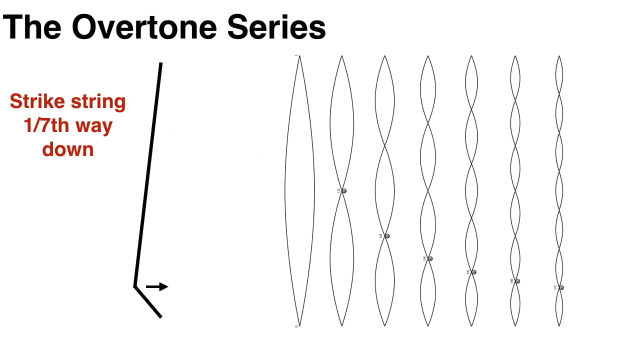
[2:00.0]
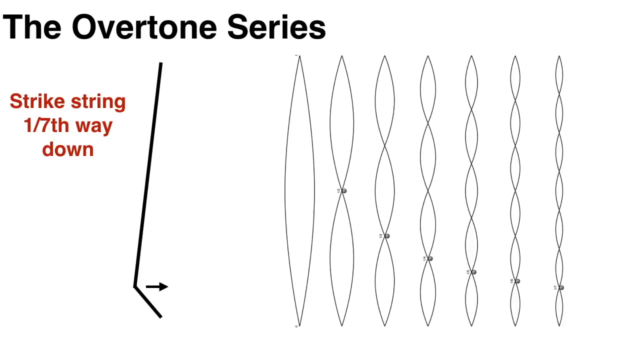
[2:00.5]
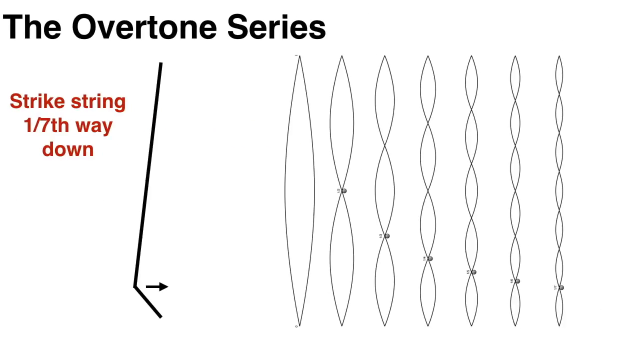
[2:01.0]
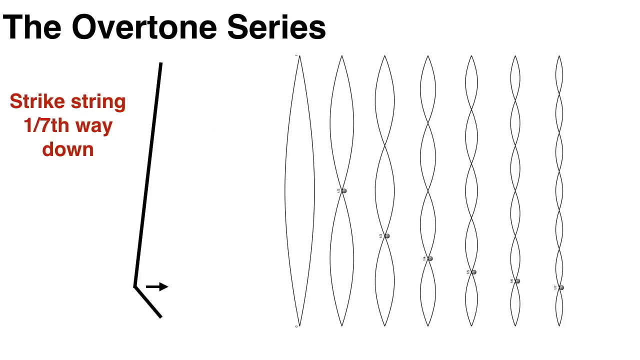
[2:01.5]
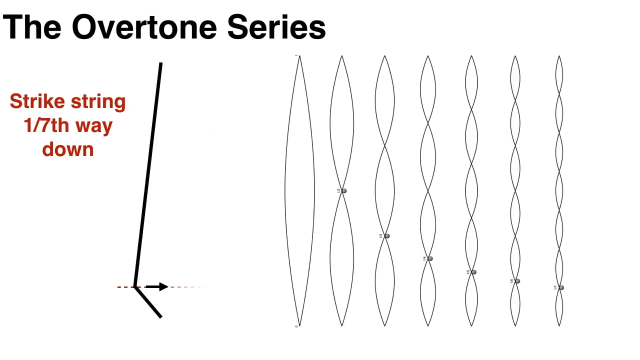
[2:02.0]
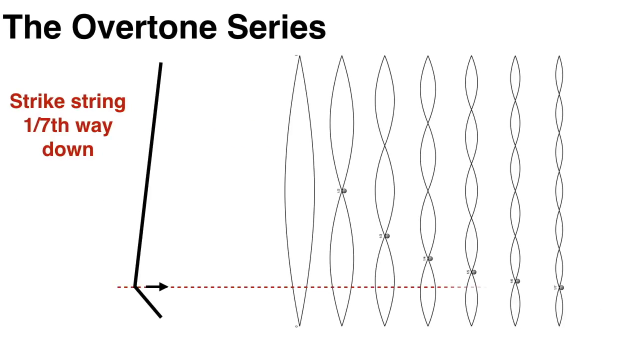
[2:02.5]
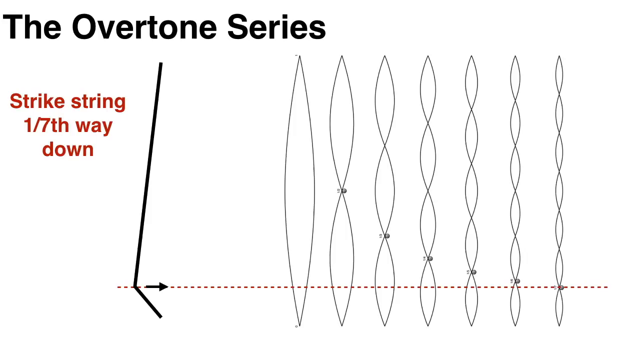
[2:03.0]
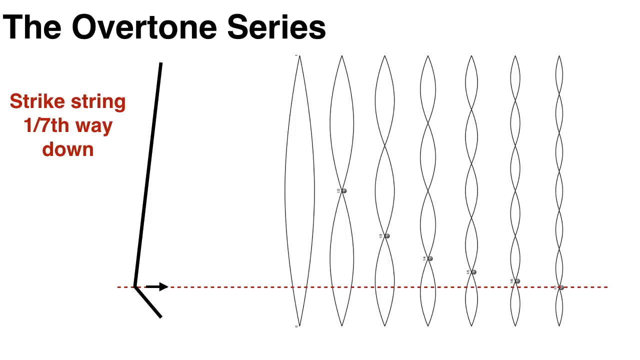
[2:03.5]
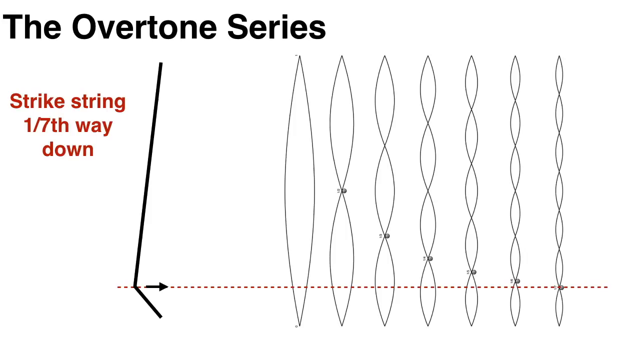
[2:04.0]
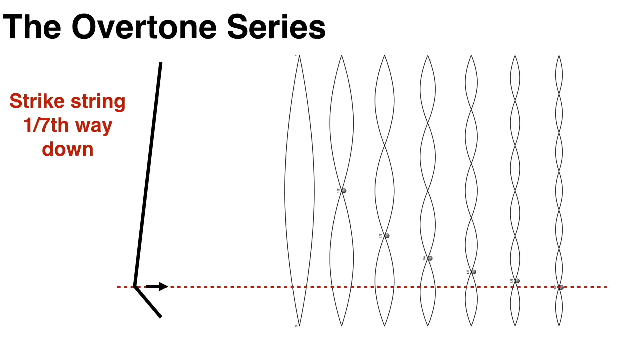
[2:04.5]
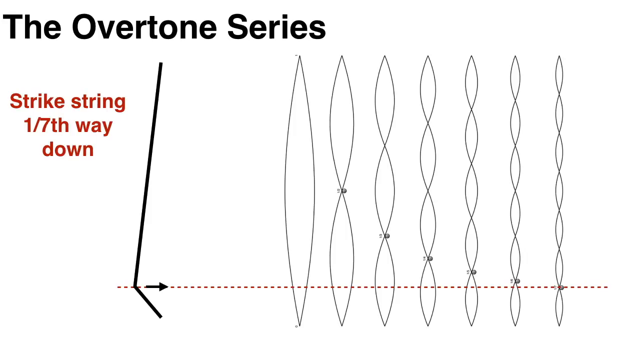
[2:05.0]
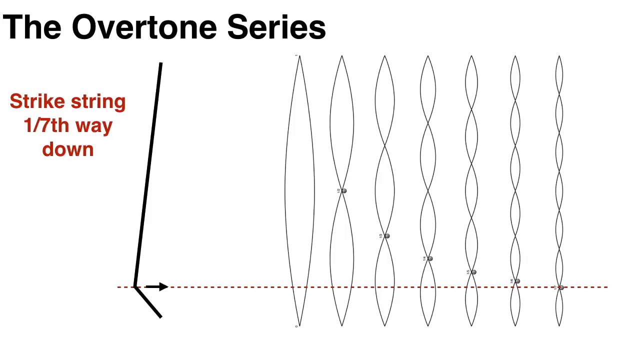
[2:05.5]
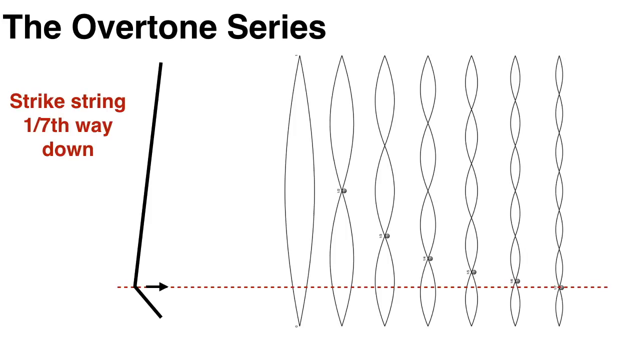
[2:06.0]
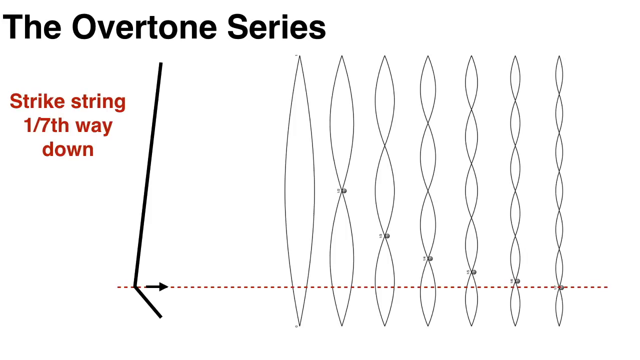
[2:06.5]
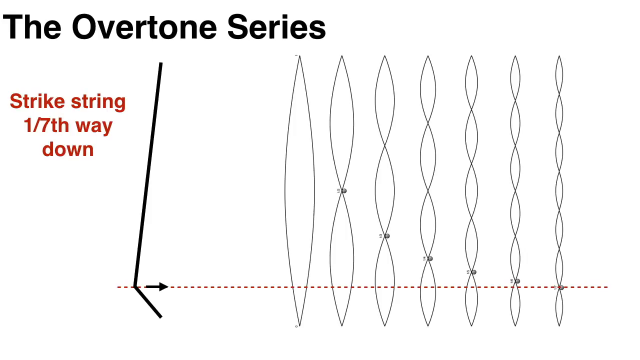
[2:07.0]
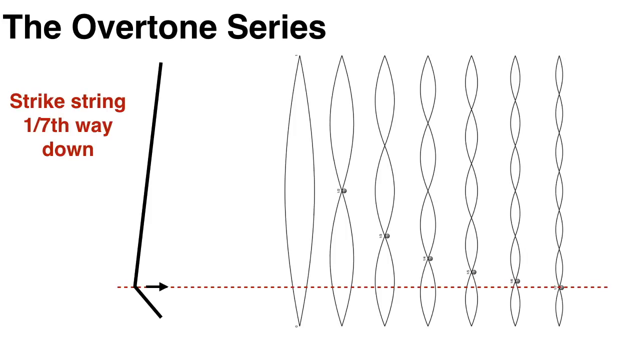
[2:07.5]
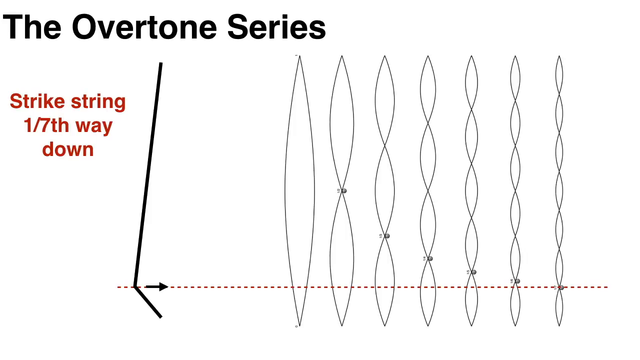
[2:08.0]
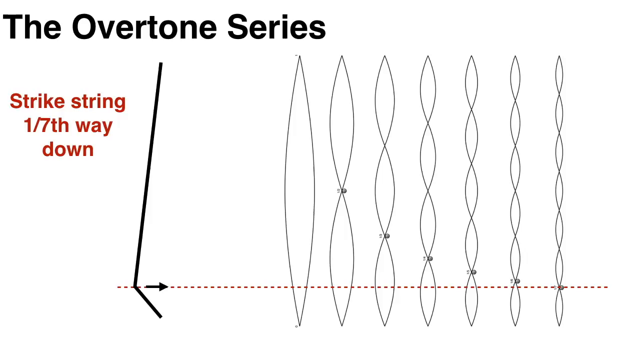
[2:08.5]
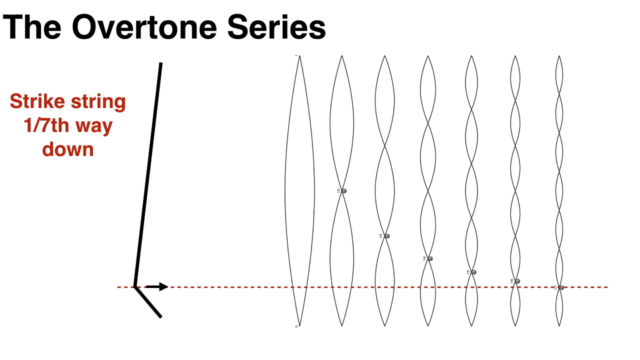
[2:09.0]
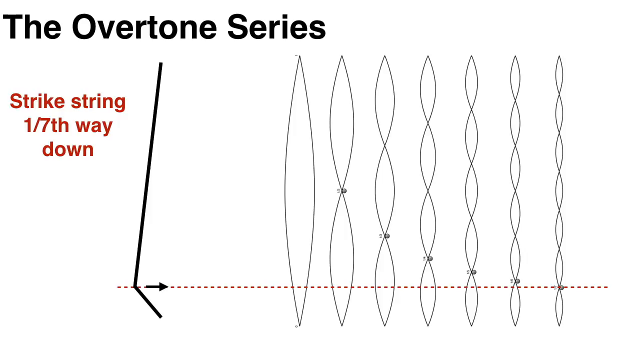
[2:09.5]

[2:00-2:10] A graphic describes the overtone series. On the left, red text reads "strike string one seventh way down," and the string shows exactly where to strike. There is a symbol on the left, and on the right are the different possibilities for the waves: the further down the string is struck, the bigger the wave, and each spot shows the middle point where the wave goes up and down. A dotted red line across the page marks where the balance is.